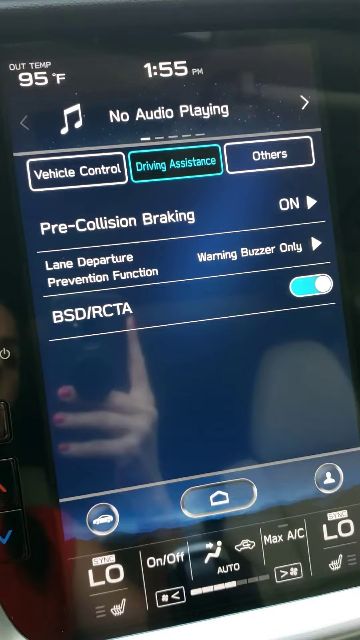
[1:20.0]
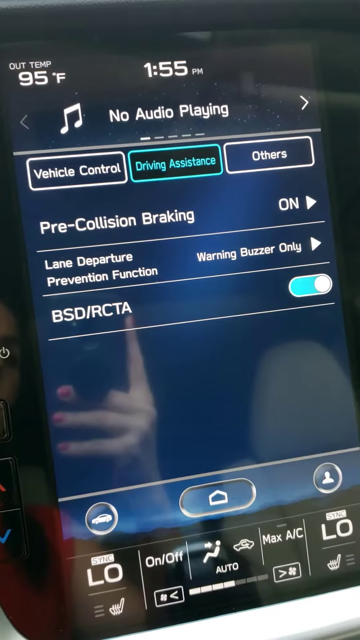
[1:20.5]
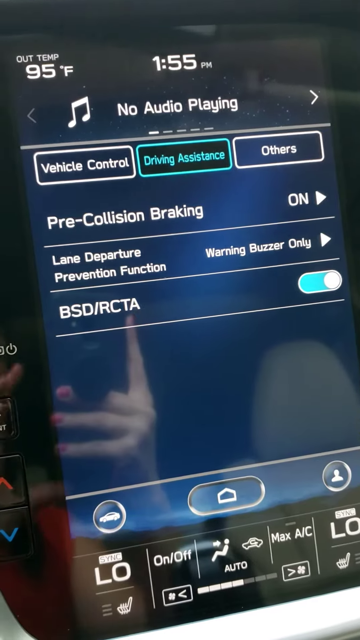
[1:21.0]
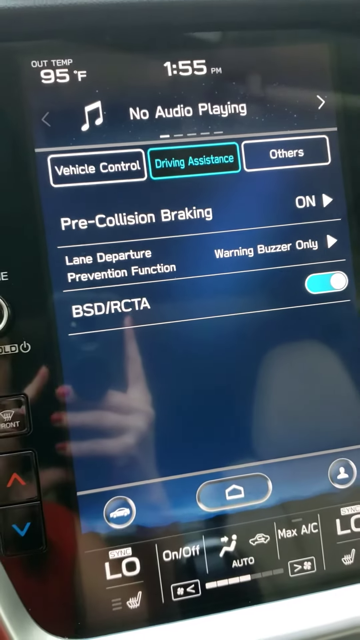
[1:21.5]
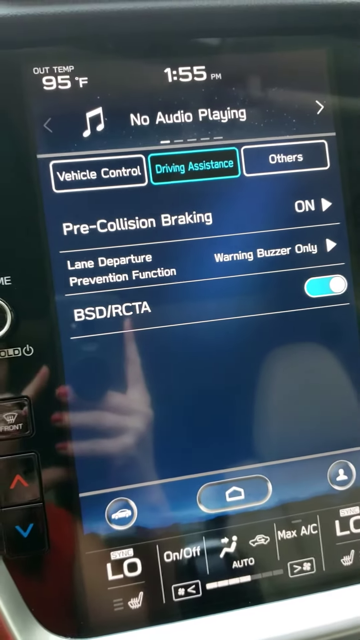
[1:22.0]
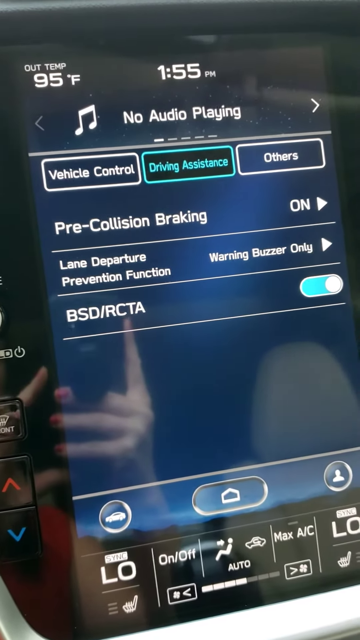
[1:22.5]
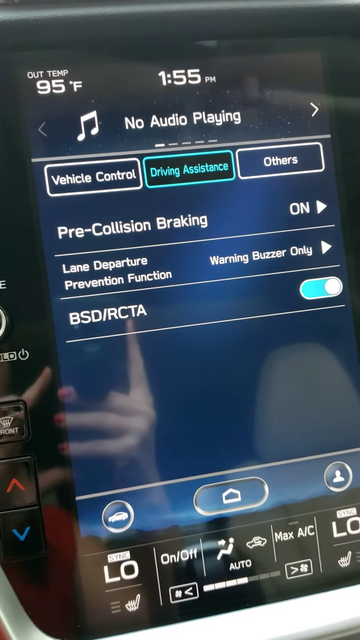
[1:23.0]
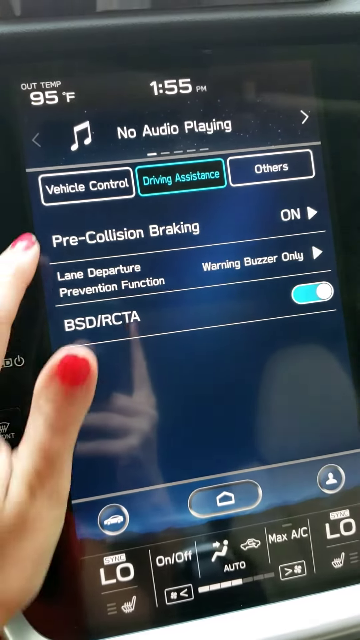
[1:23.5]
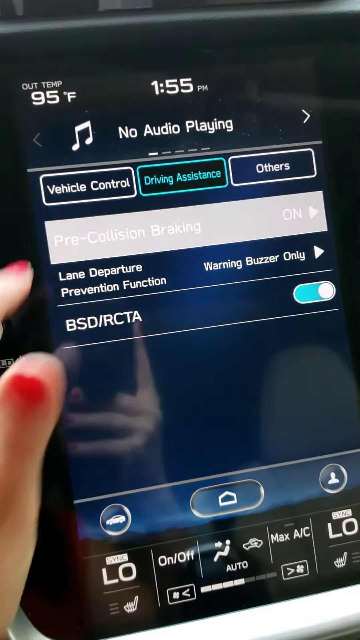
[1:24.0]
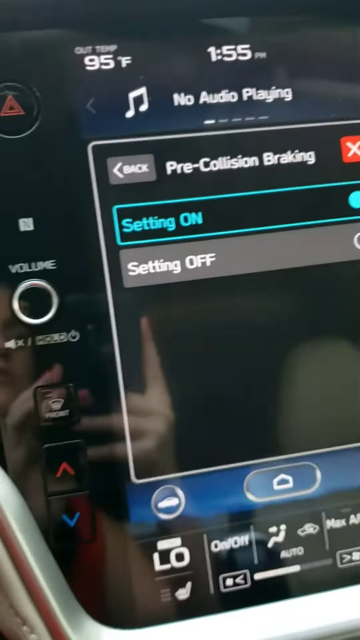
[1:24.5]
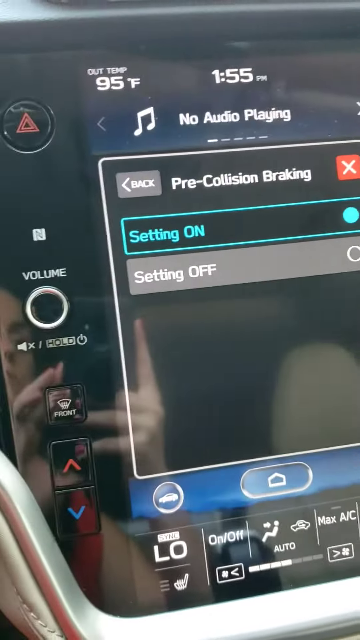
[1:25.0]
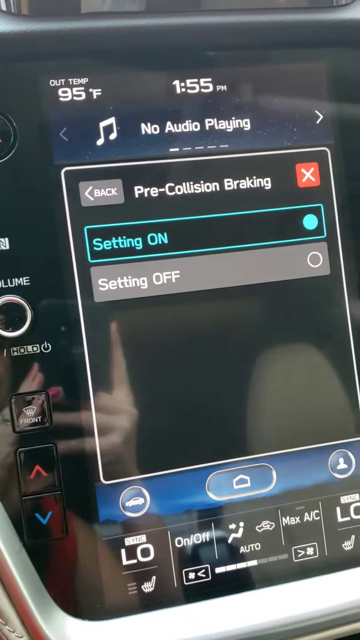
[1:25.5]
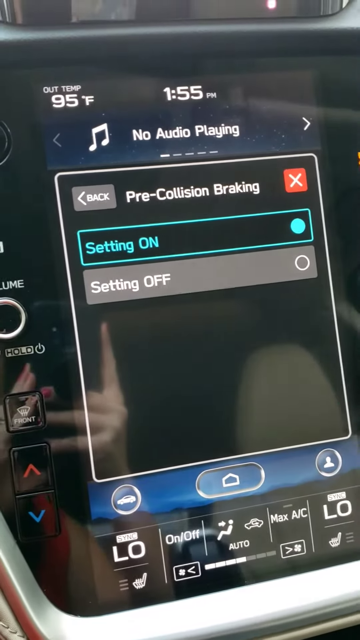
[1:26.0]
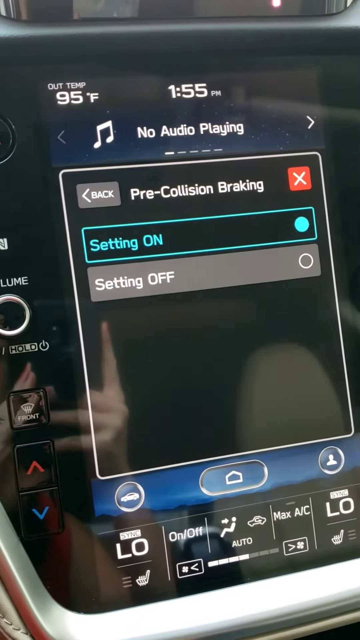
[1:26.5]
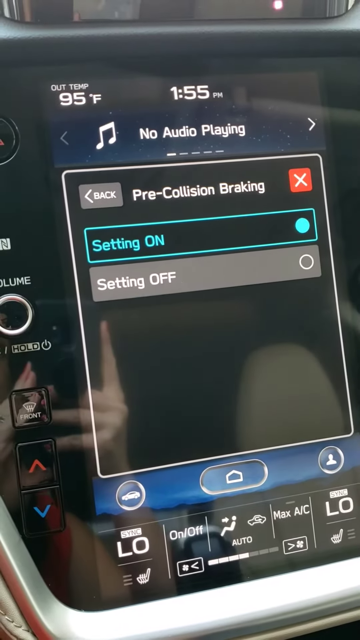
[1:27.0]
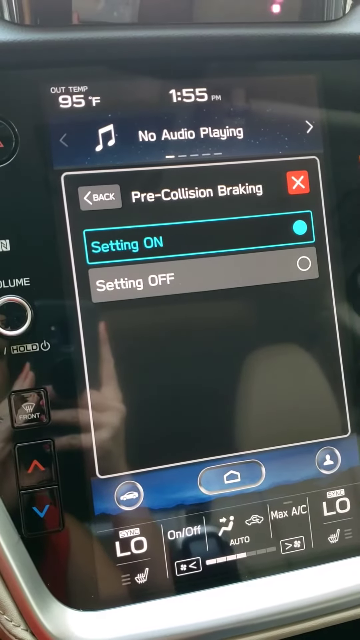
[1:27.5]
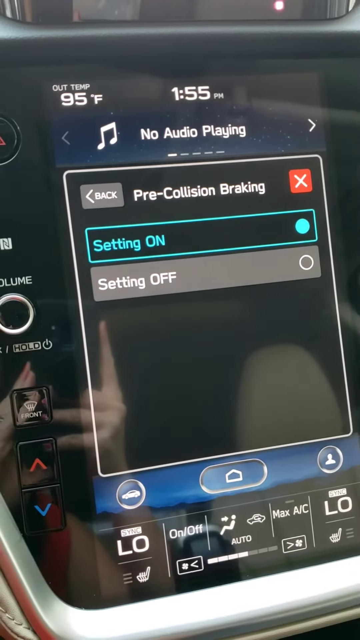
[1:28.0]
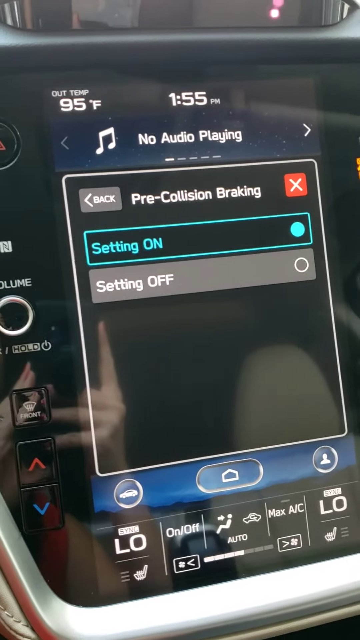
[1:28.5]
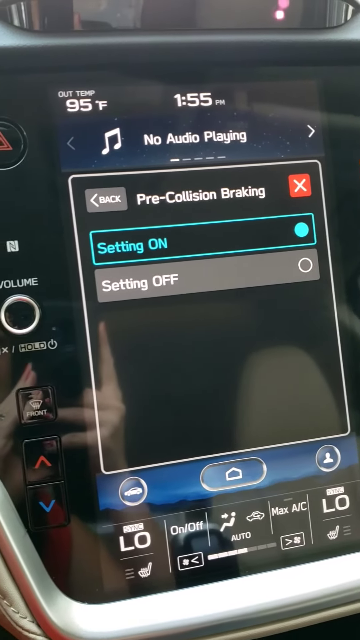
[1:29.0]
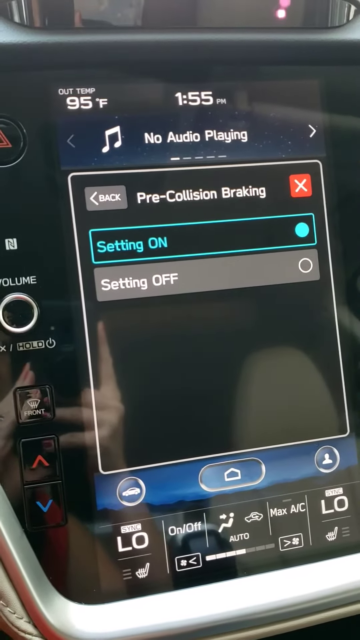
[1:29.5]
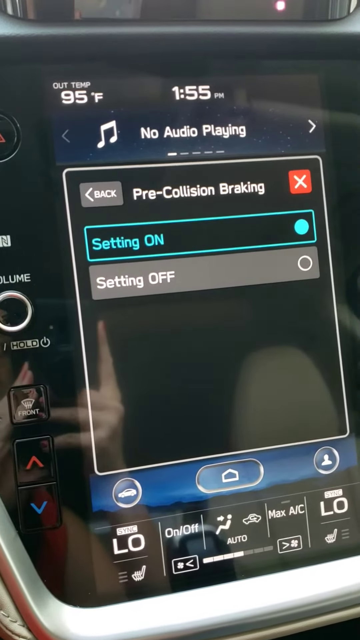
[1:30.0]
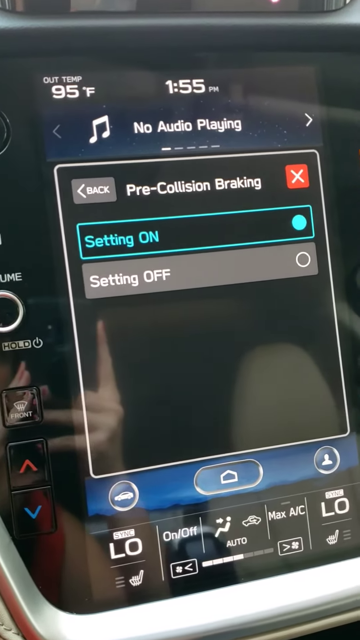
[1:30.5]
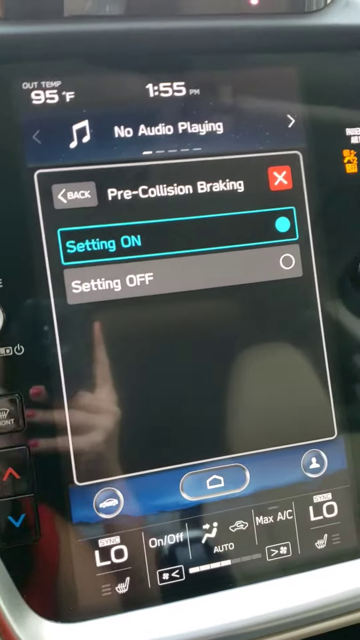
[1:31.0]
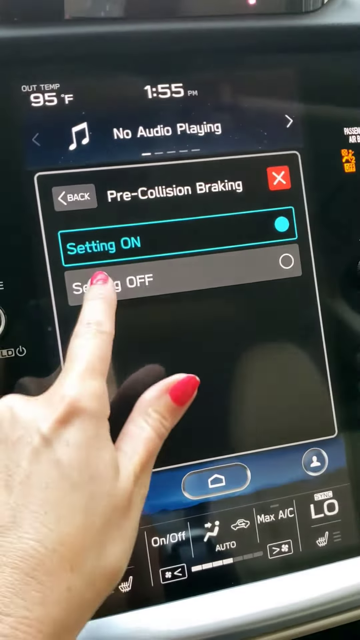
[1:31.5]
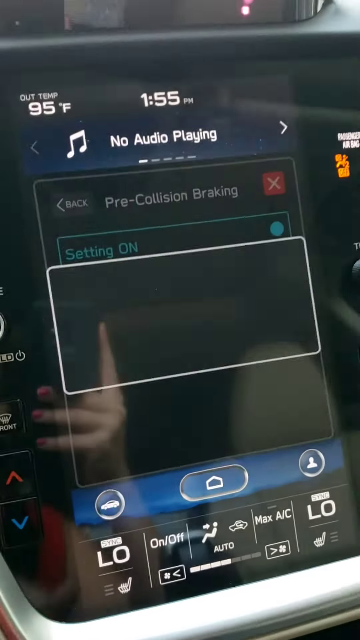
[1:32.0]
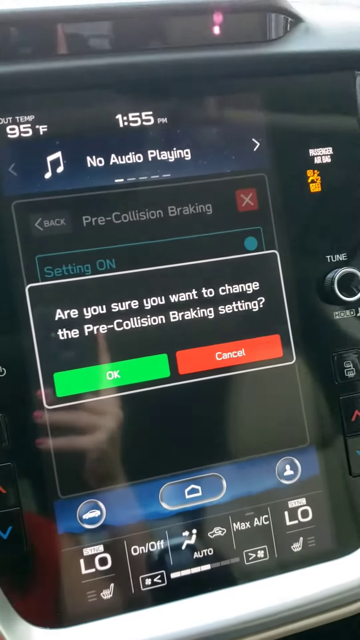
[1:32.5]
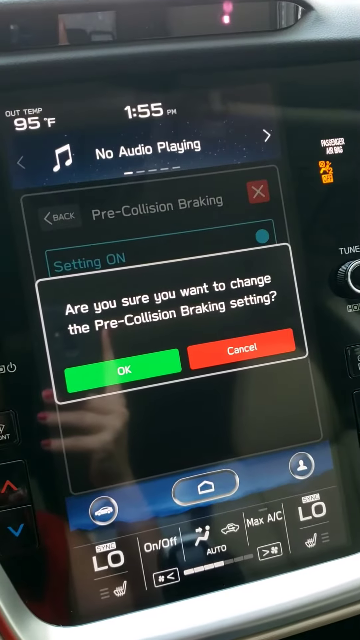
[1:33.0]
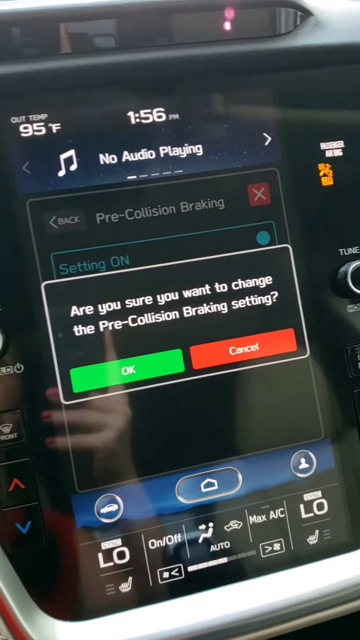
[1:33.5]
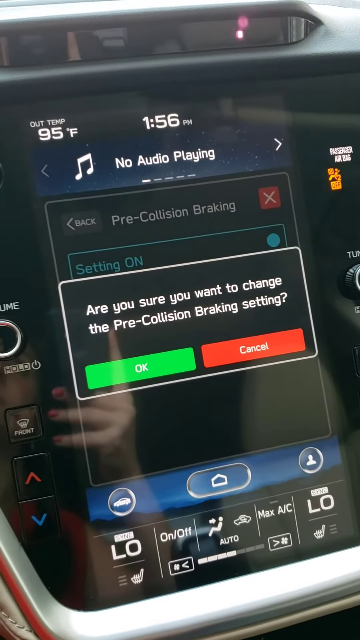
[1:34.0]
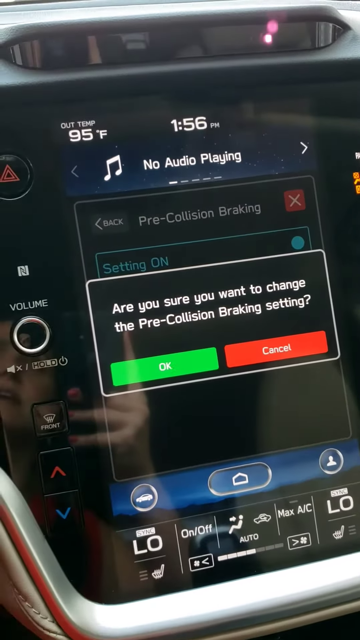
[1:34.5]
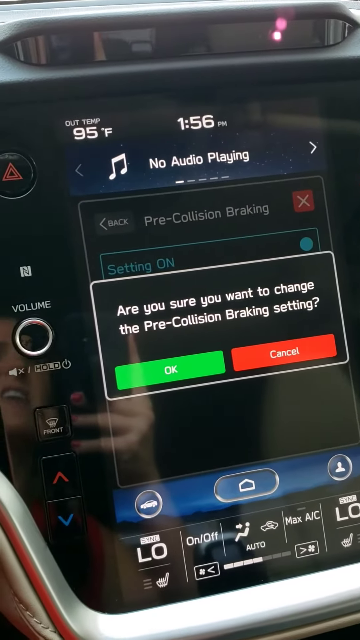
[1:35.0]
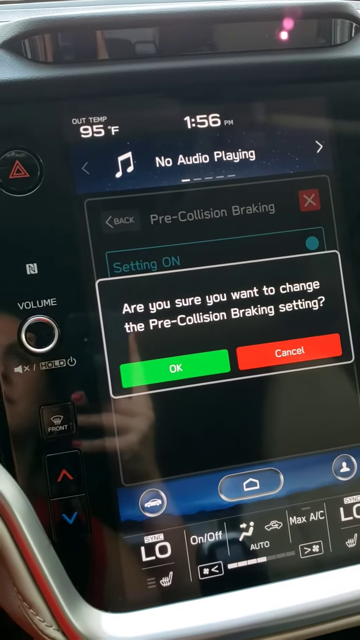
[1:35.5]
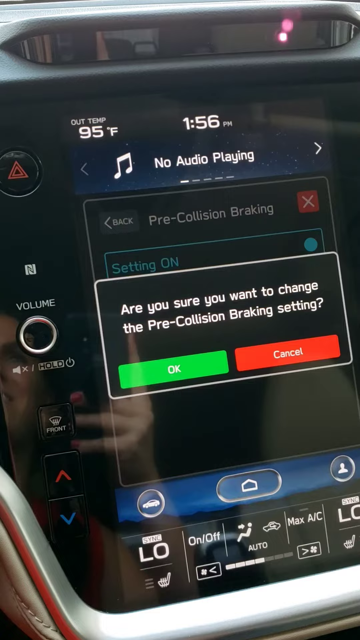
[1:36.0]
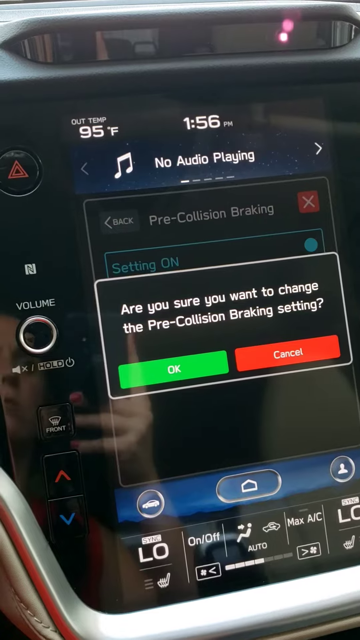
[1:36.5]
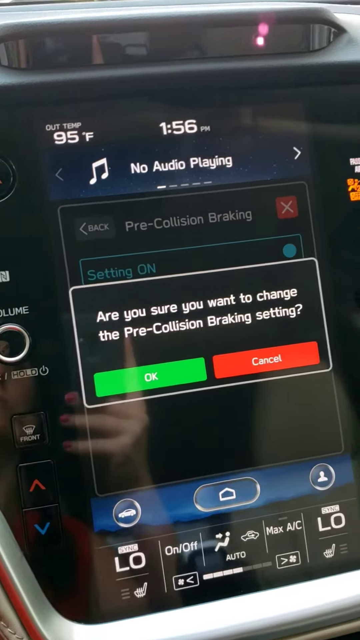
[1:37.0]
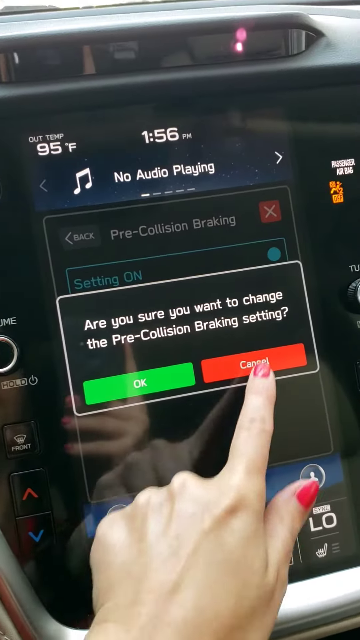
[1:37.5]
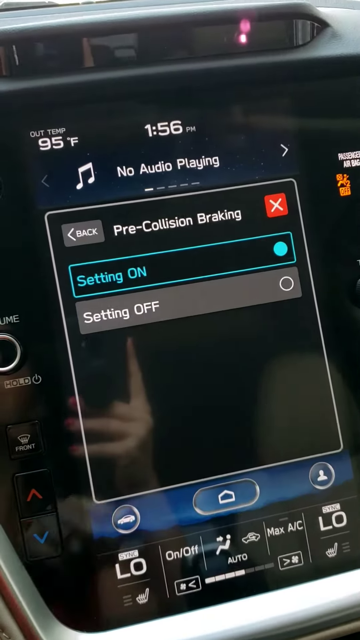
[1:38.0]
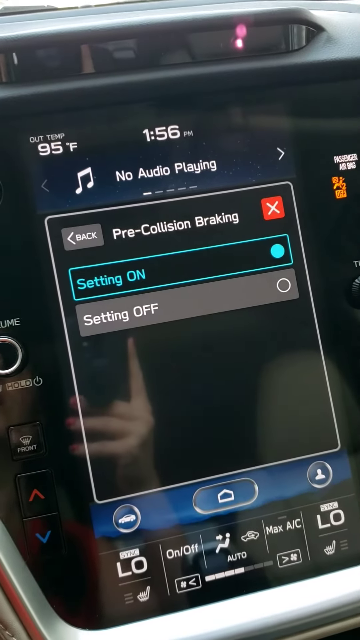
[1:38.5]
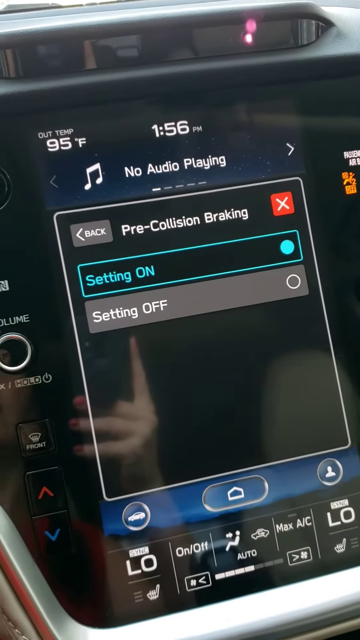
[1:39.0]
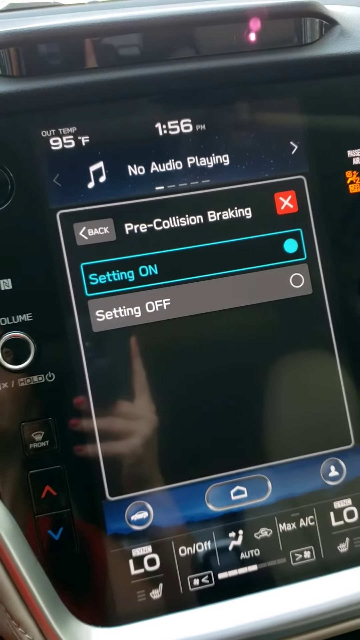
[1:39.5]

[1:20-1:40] A woman clicks through options in her car while holding another instrument in her hand; at this point she appears to be holding both in her hand. The screen suddenly reads "are you sure you want to change the pre-collision braking setting?" with off, on, and cancel buttons; the on button is green and the cancel button is red. She is talking to somebody, and the reflection of her face is visible in the very shiny screen. She holds something with her index finger up and the rest of her fingers cupped around the item. Her pink nail polish is clearly visible when she clicks the screen in front of the camera. She talks the entire time while touching the screen and picking her driving assistance settings.